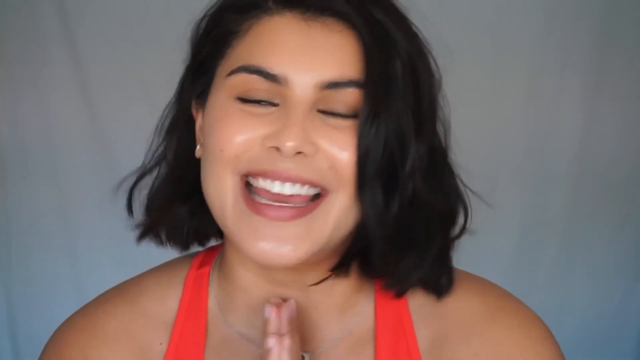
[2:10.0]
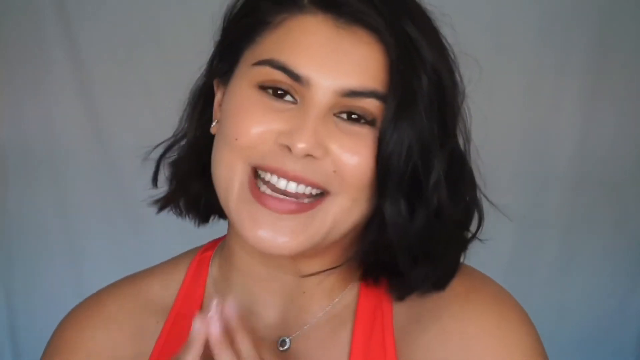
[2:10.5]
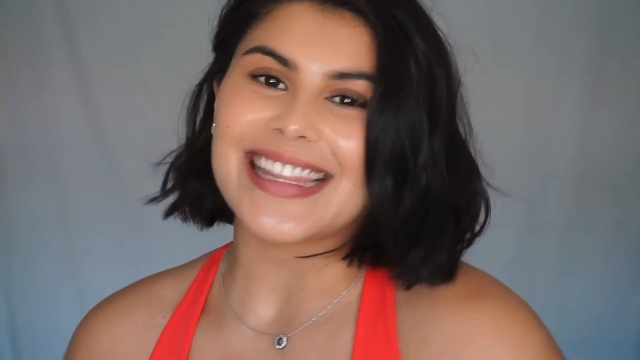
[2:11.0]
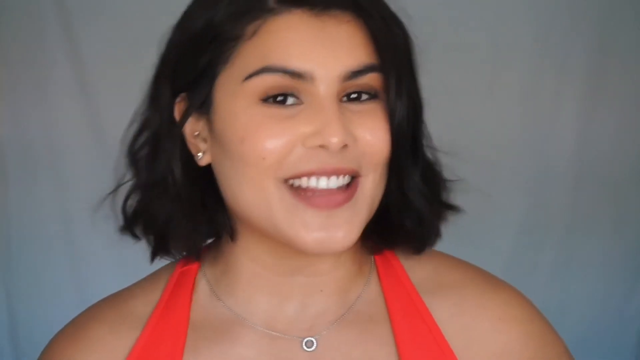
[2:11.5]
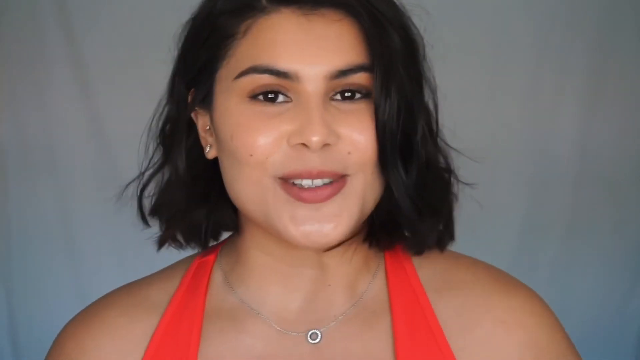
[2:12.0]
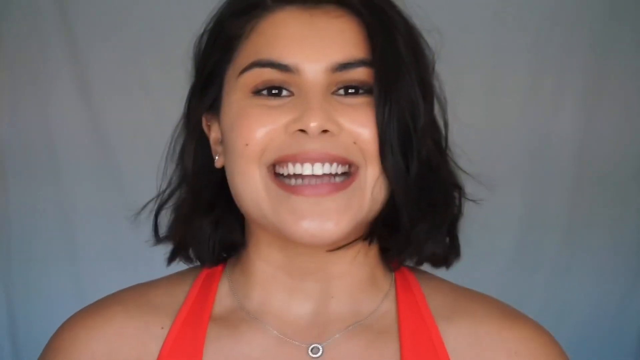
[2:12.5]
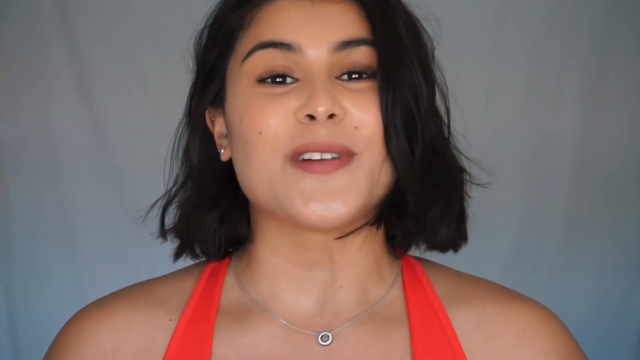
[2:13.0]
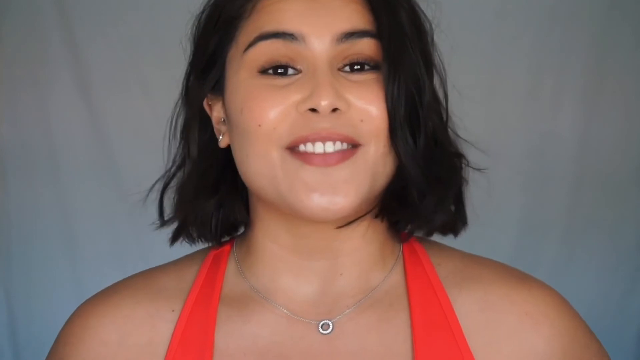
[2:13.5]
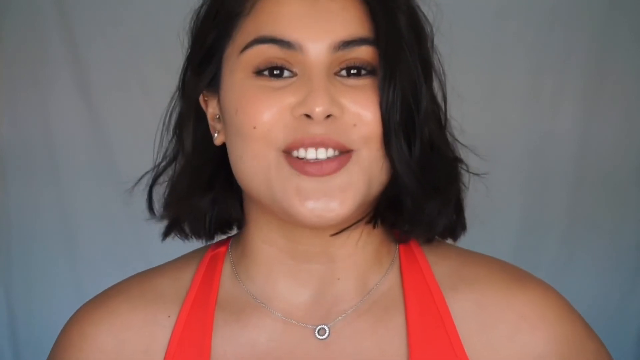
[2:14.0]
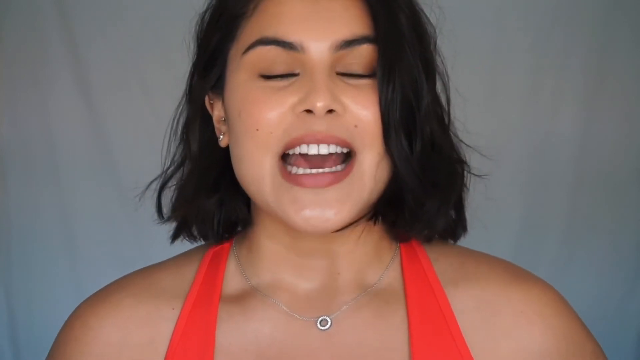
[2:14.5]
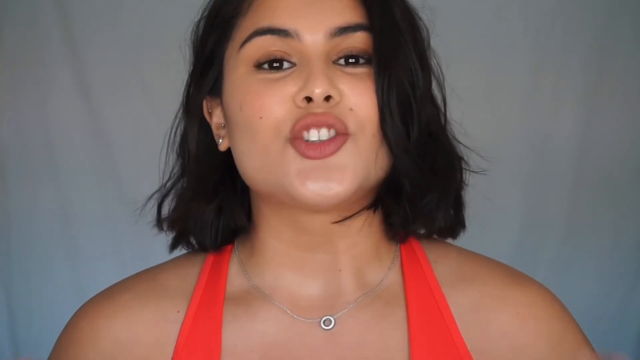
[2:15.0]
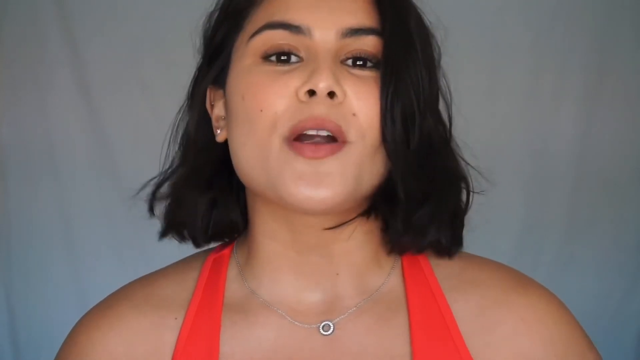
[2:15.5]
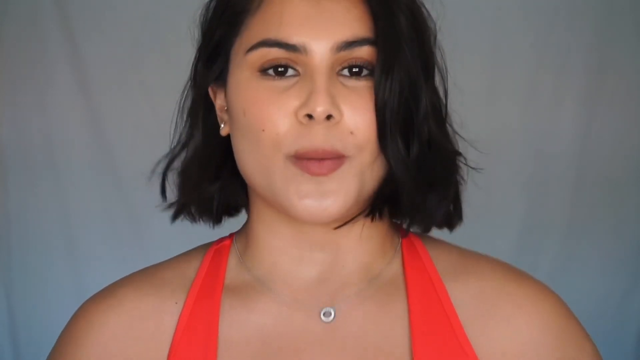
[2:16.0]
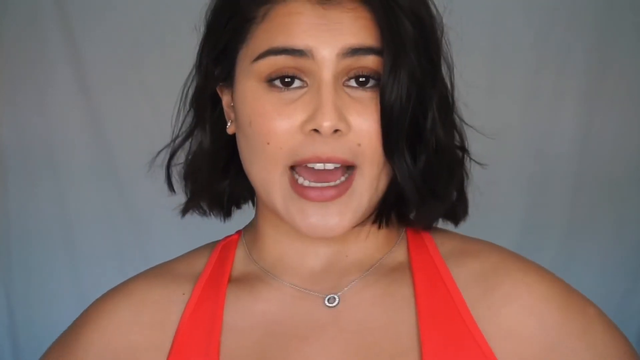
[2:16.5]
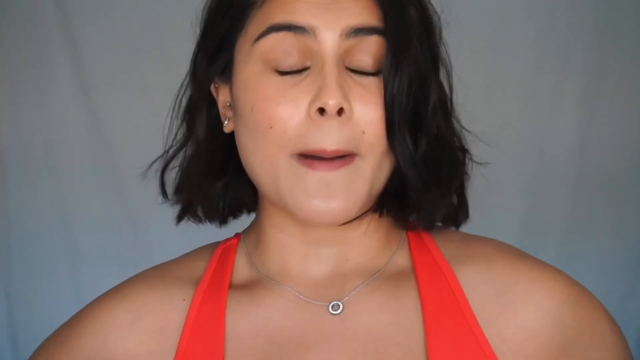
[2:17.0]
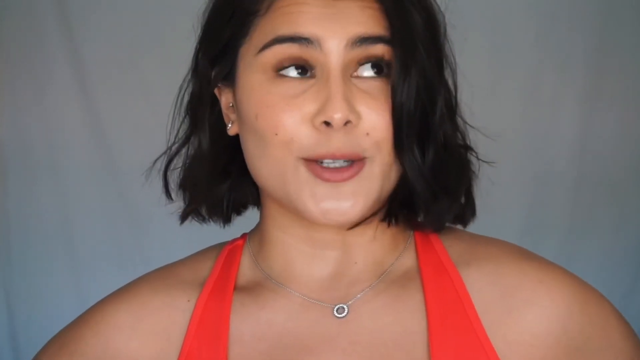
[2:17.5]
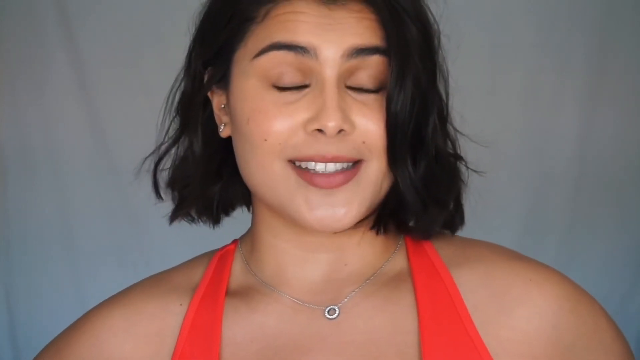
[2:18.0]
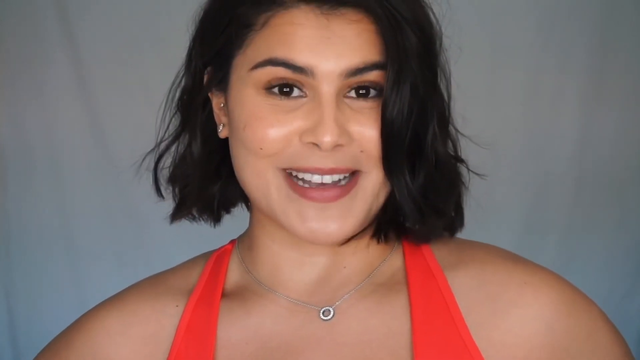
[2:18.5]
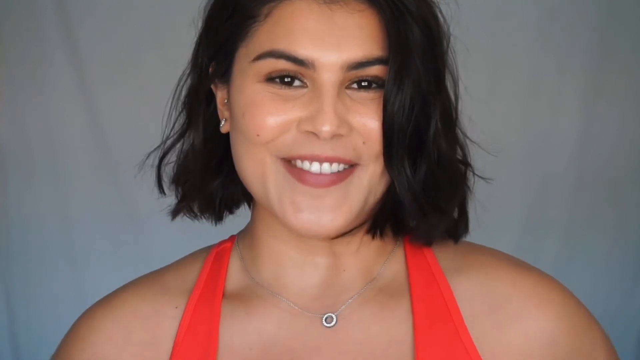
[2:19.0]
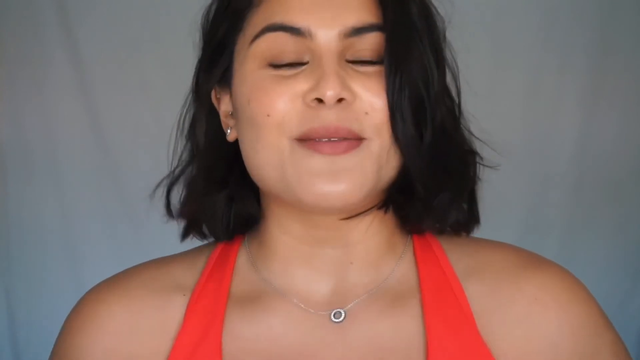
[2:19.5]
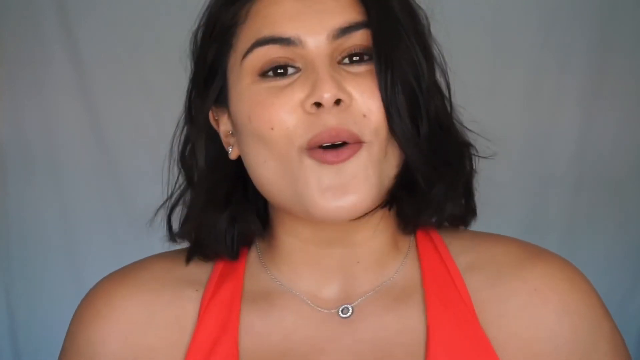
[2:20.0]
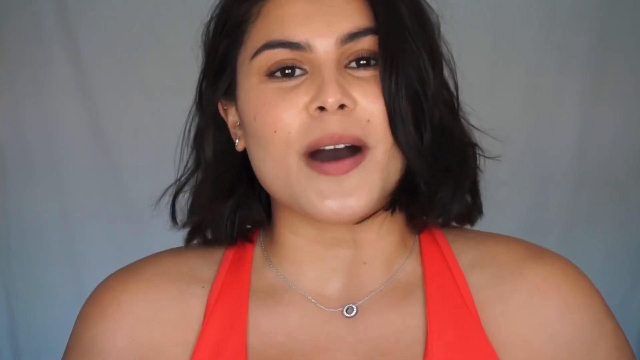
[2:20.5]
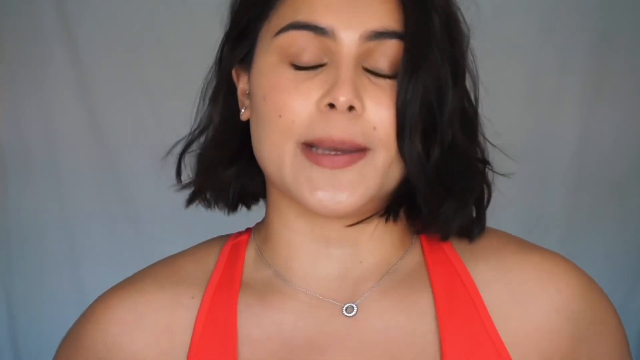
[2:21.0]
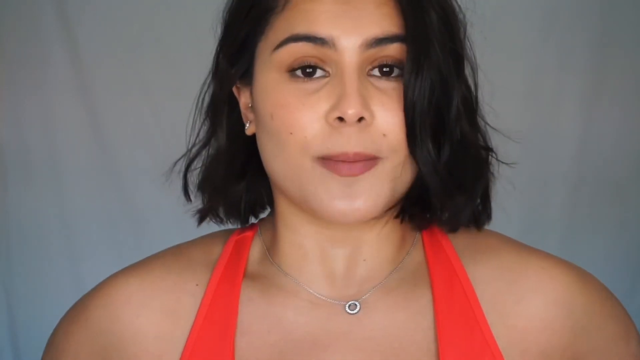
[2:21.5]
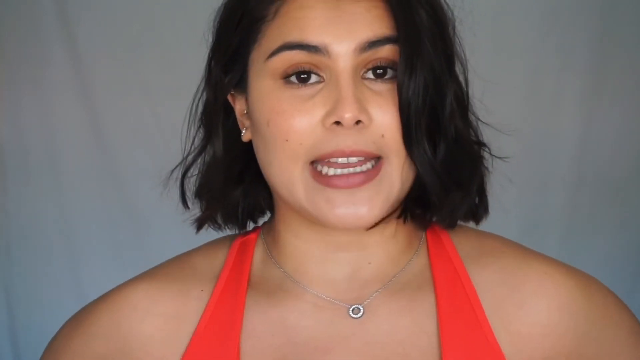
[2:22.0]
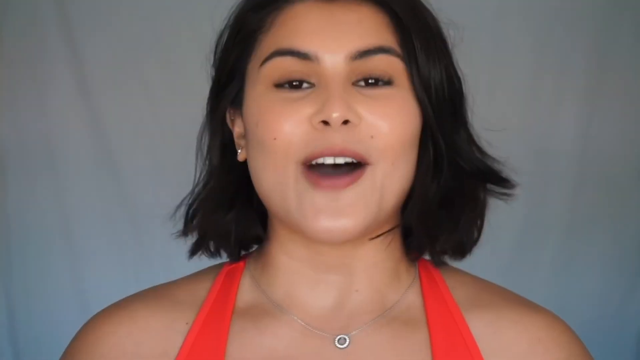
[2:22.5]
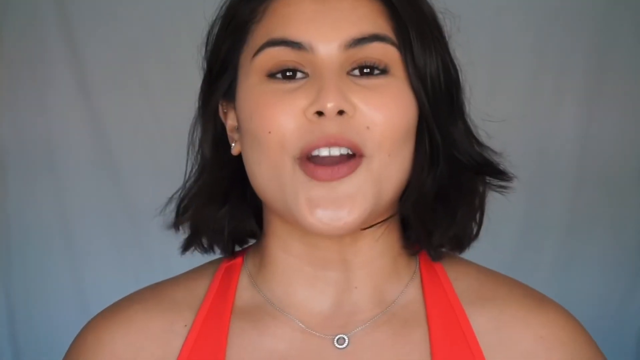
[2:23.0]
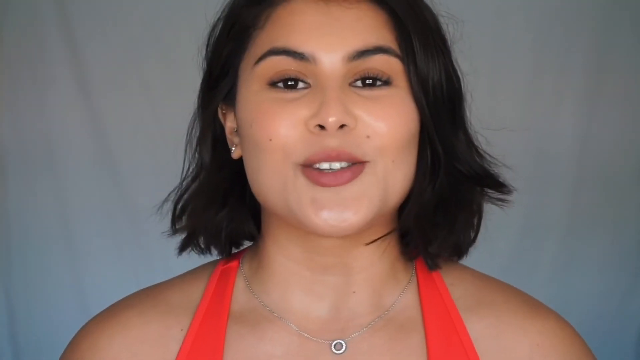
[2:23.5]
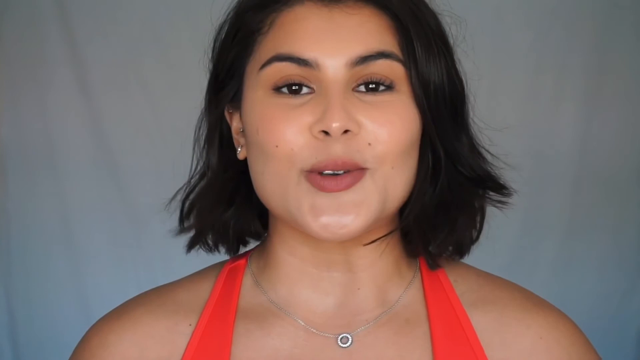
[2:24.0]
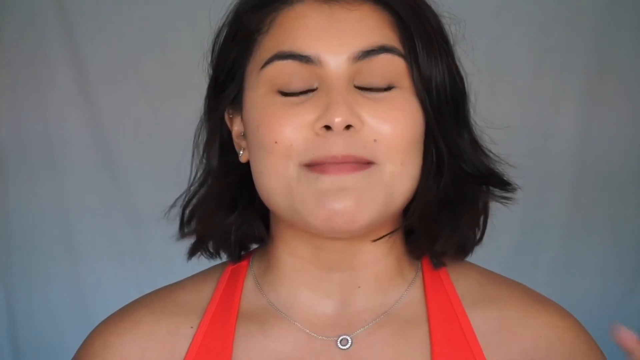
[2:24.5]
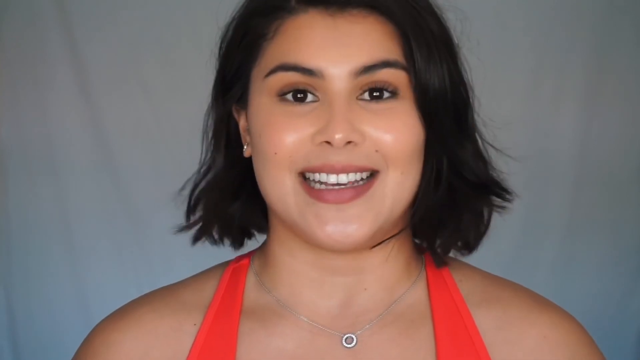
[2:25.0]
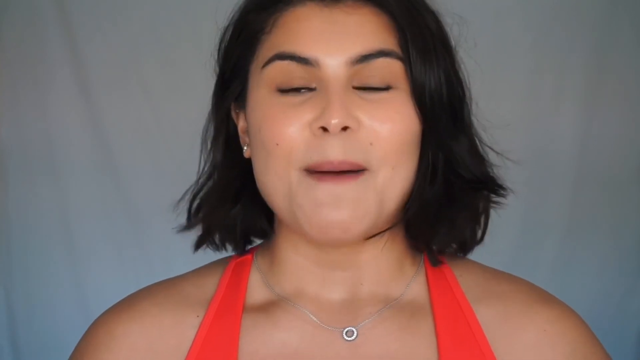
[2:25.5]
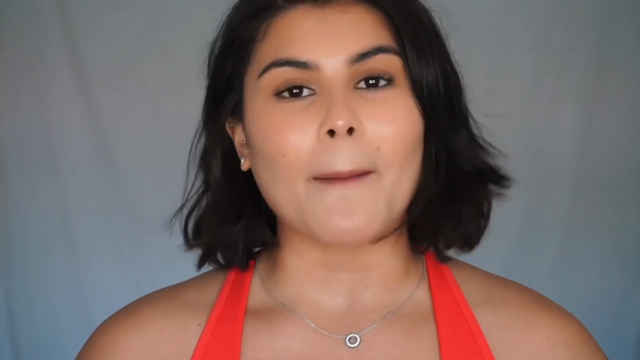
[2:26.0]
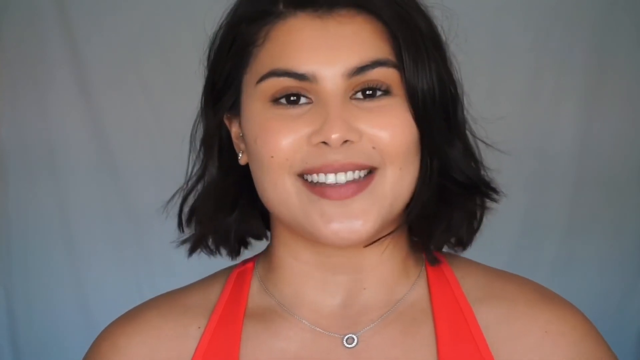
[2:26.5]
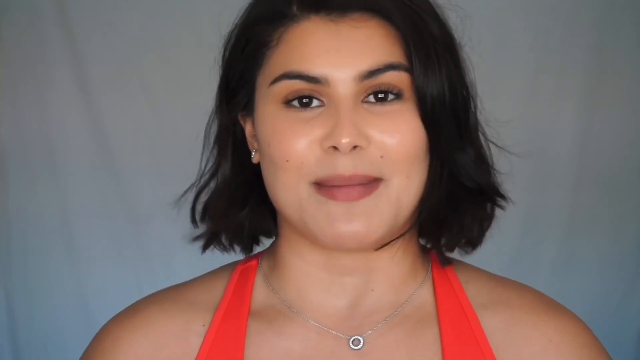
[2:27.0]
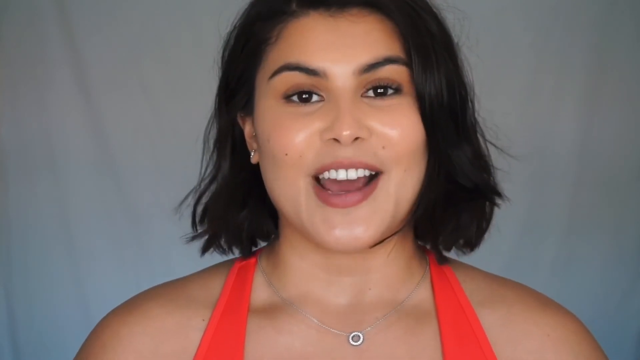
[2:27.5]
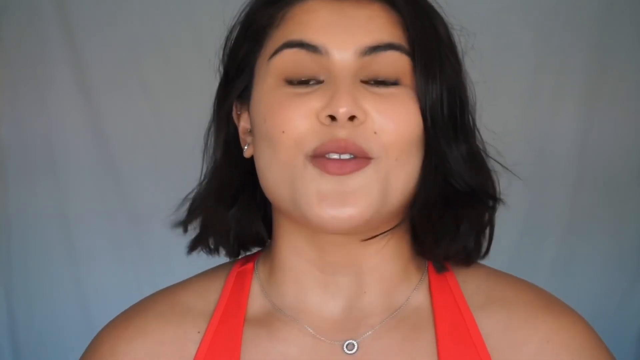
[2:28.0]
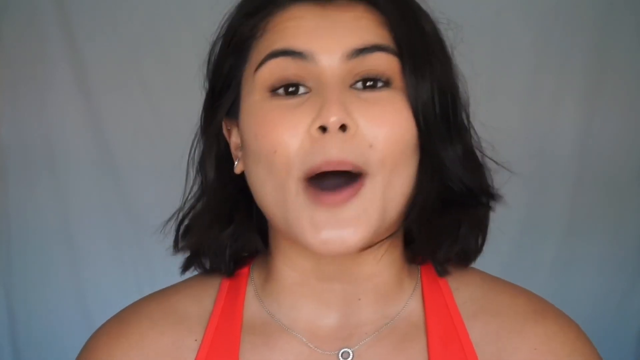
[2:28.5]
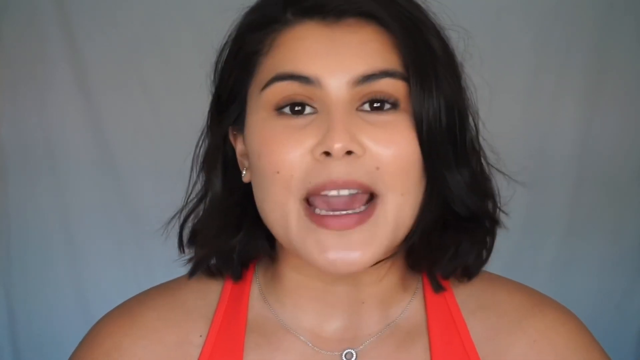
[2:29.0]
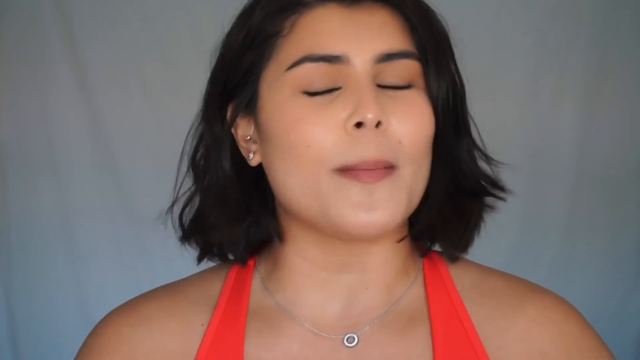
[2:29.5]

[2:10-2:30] The same close-up of the woman's face continues; she is still wearing the orange bathing suit and standing in front of a white curtain. Her smile is wider than ever, and she moves her body slightly while she speaks, seeming very happy and enthusiastic. At first her hands are still on her chest in the praying position, as if she is saying thank you, but she quite quickly drops them out of frame as she angles her body from side to side while talking. After a jump cut she continues talking directly to the camera in exactly the same position. Her expression becomes slightly more serious for a while, then she pulls a sassy face and flicks her eyes up toward the top right corner of the frame as if making a joke, before flicking her eyes back to the camera and smiling broadly. She shrugs her shoulders slightly and drops them as she continues to speak directly to the camera. After another jump cut she continues speaking and smiling, and toward the end she leans in slightly to emphasise her point.